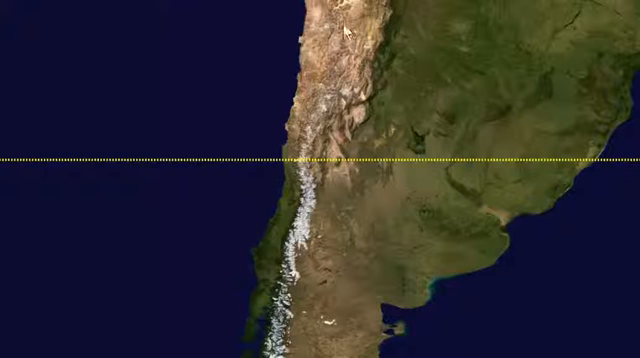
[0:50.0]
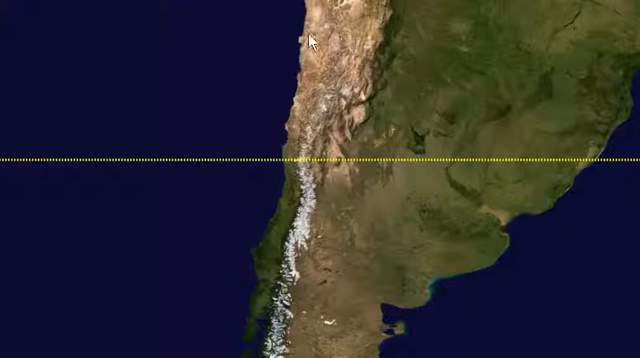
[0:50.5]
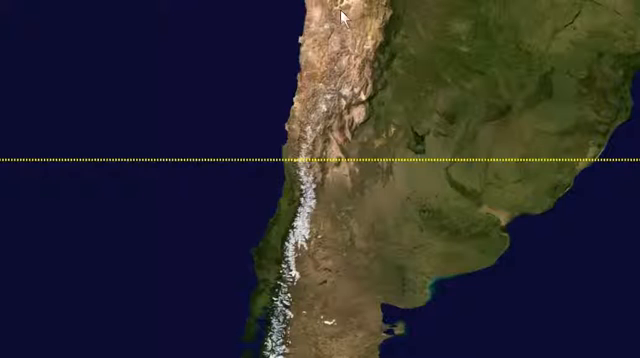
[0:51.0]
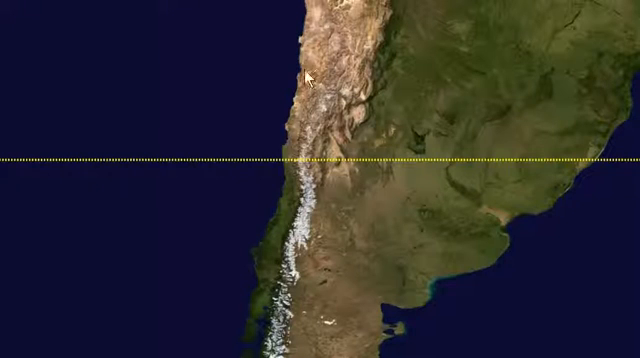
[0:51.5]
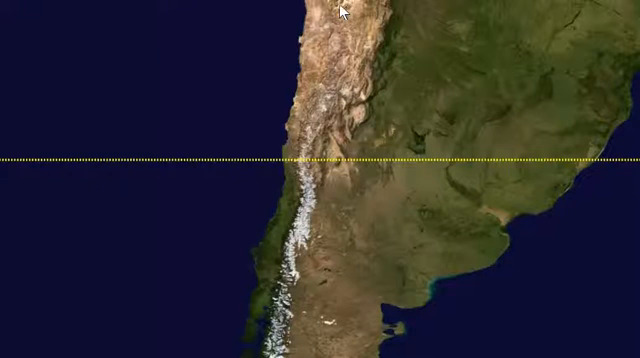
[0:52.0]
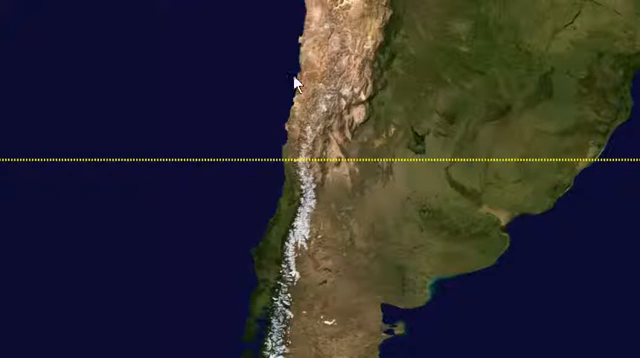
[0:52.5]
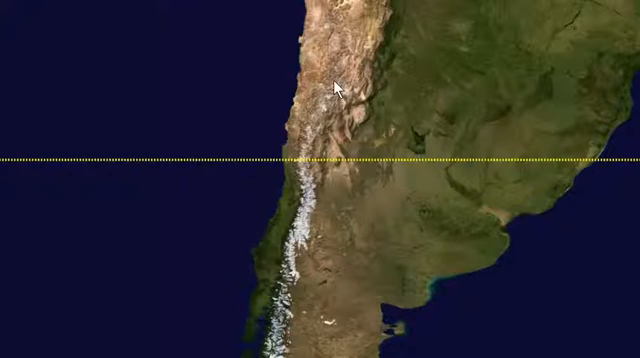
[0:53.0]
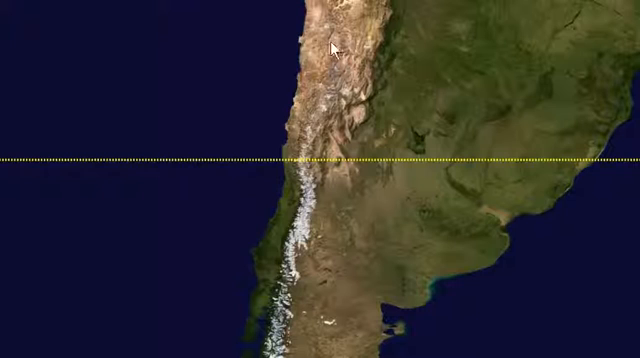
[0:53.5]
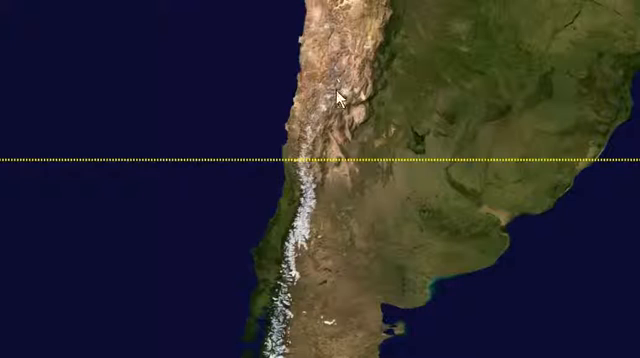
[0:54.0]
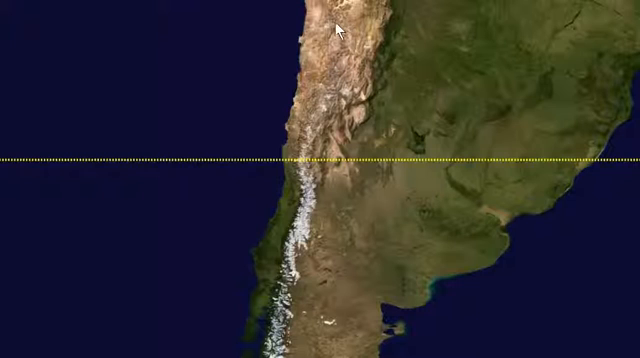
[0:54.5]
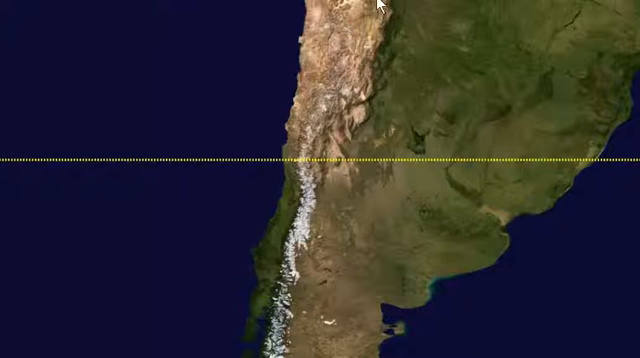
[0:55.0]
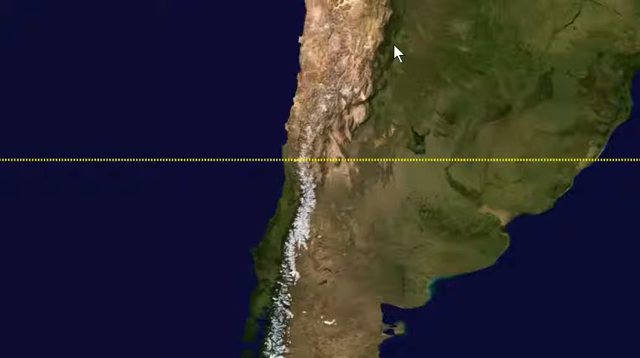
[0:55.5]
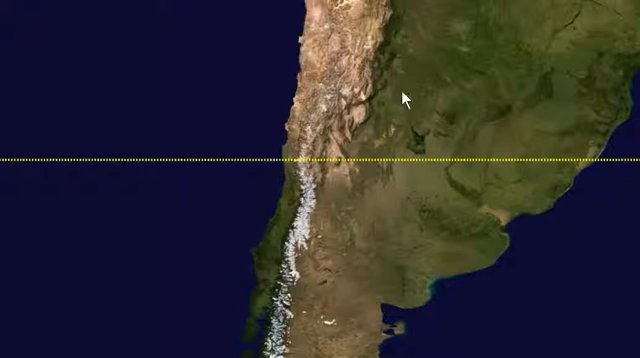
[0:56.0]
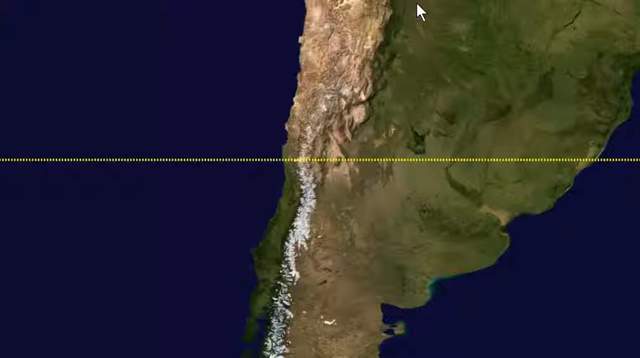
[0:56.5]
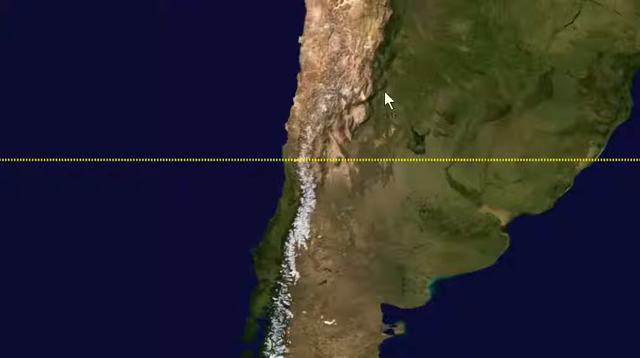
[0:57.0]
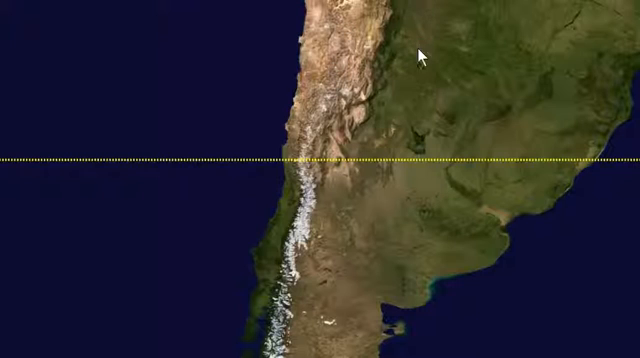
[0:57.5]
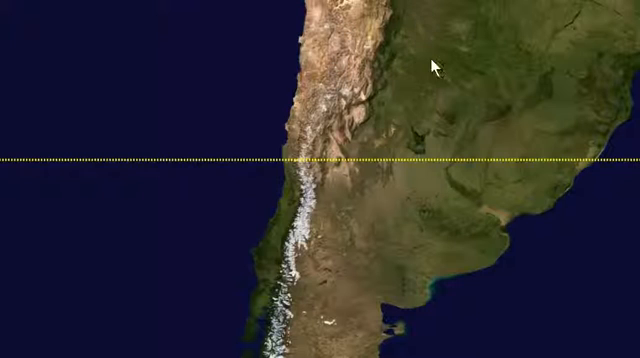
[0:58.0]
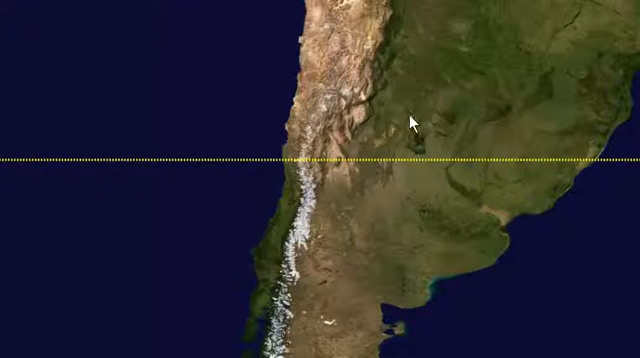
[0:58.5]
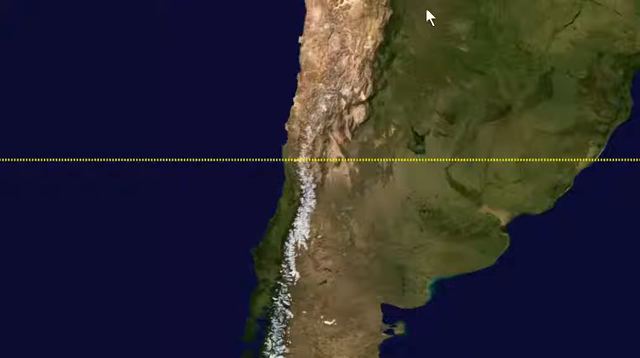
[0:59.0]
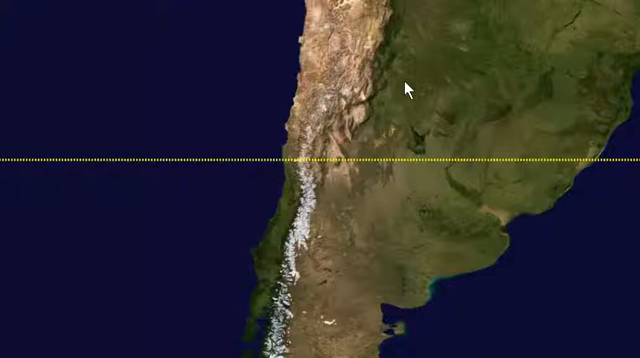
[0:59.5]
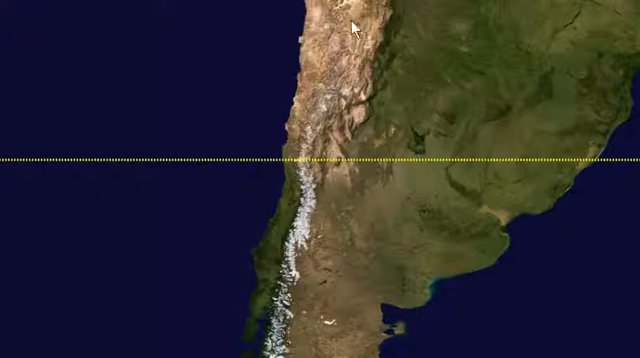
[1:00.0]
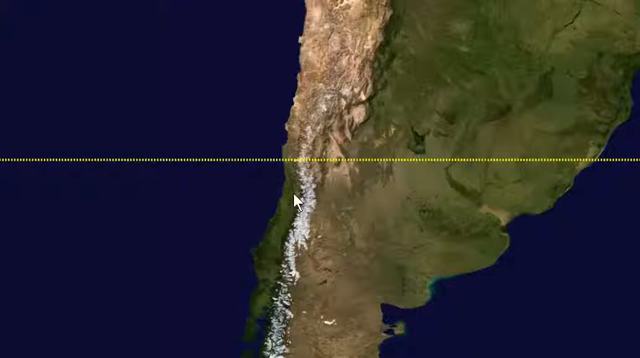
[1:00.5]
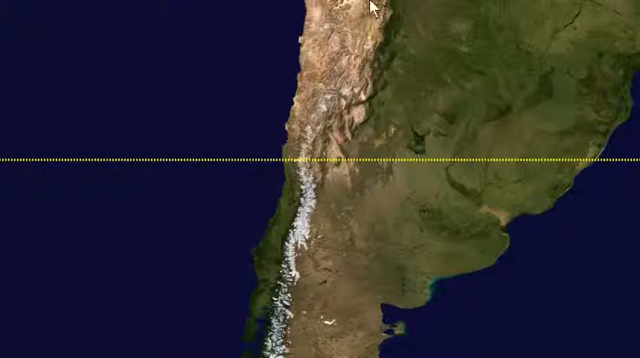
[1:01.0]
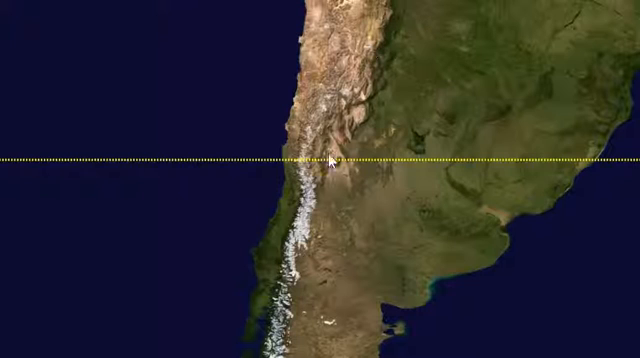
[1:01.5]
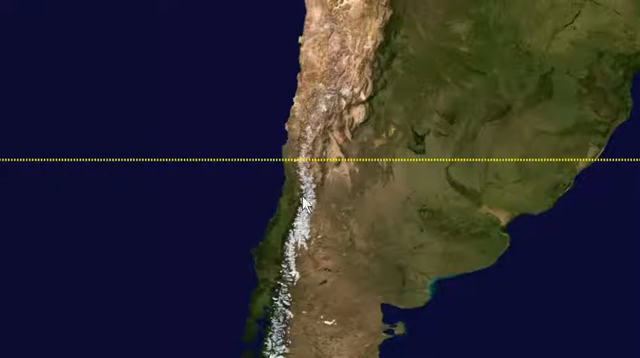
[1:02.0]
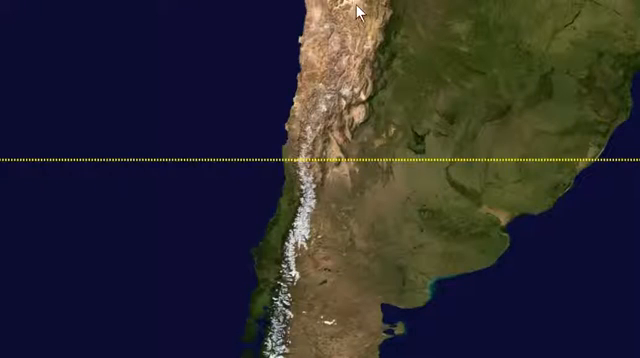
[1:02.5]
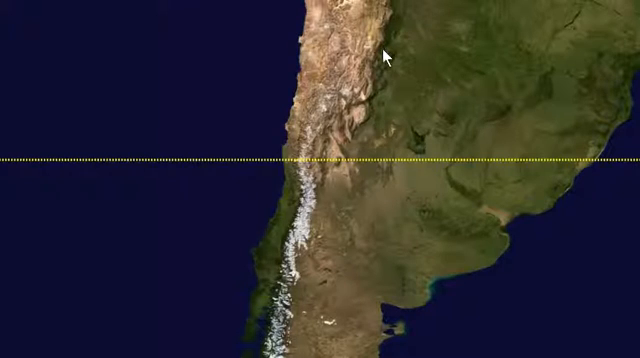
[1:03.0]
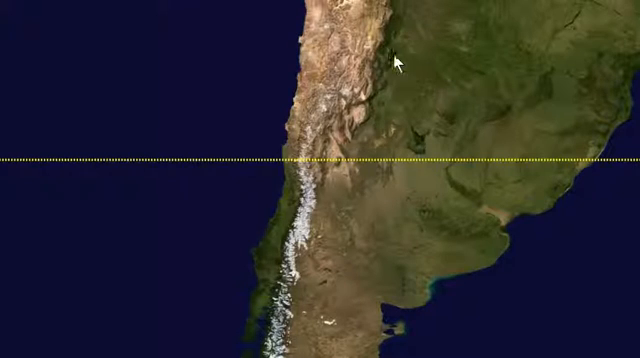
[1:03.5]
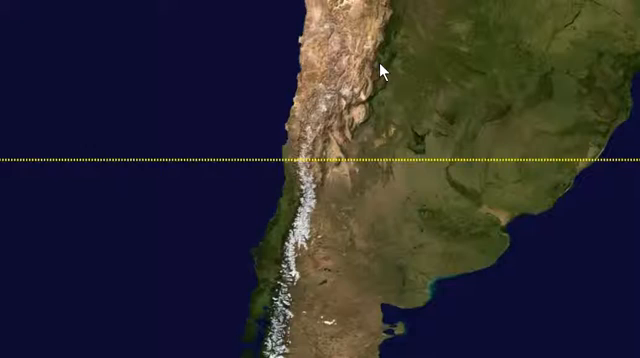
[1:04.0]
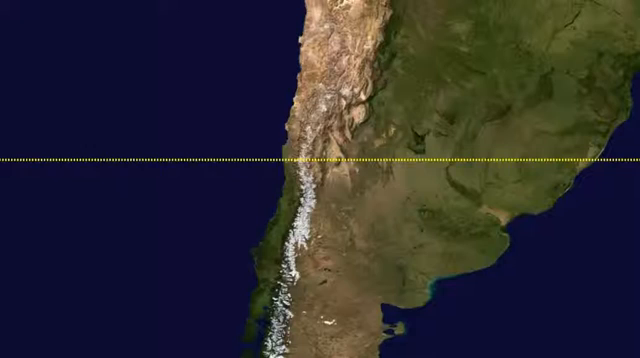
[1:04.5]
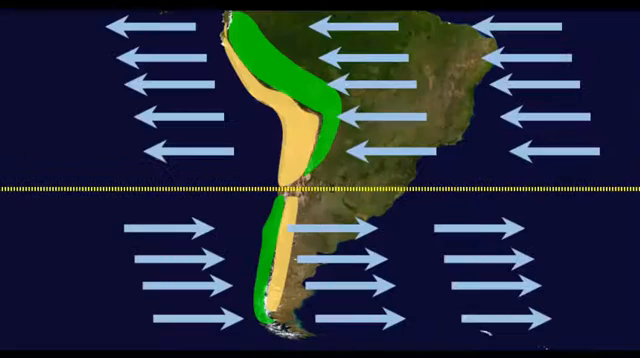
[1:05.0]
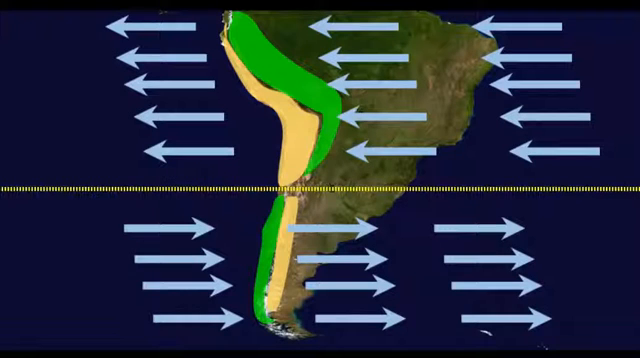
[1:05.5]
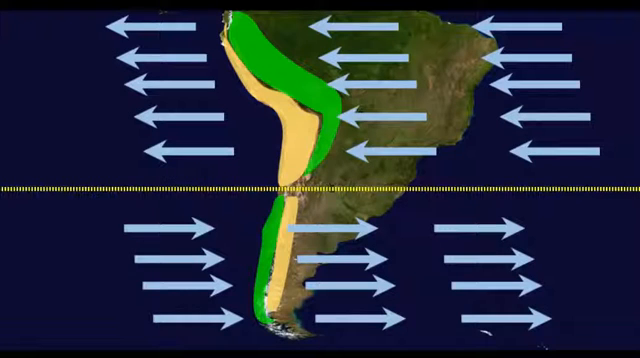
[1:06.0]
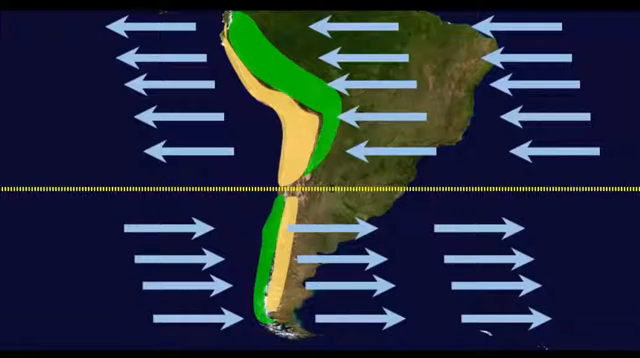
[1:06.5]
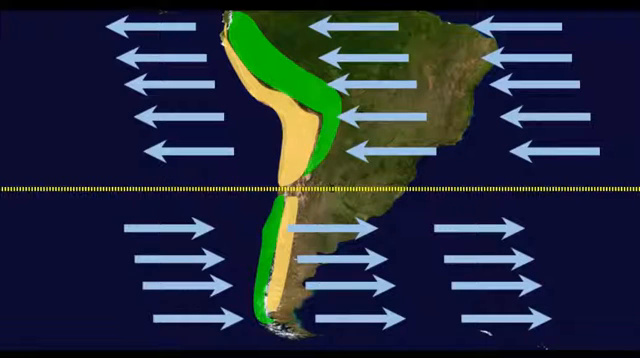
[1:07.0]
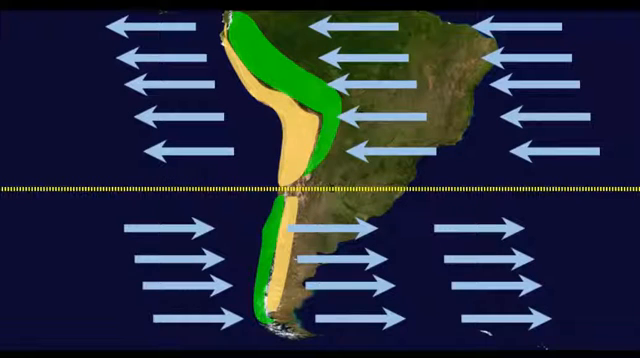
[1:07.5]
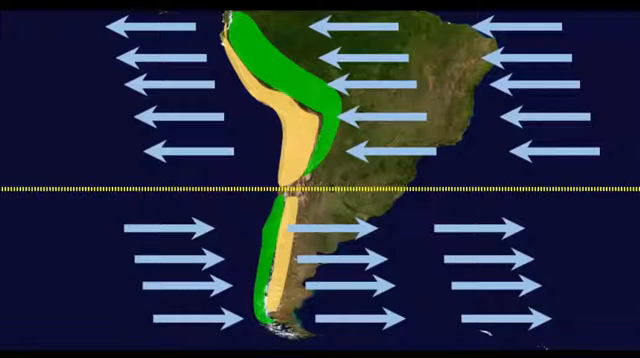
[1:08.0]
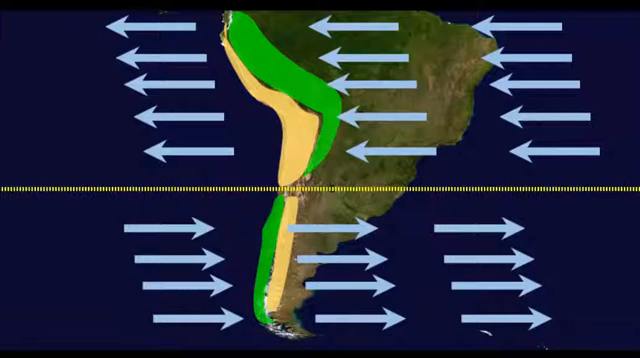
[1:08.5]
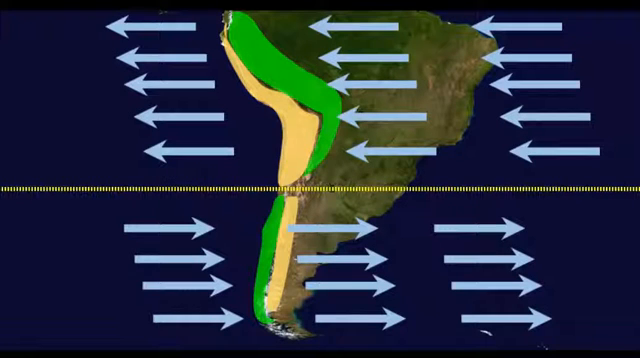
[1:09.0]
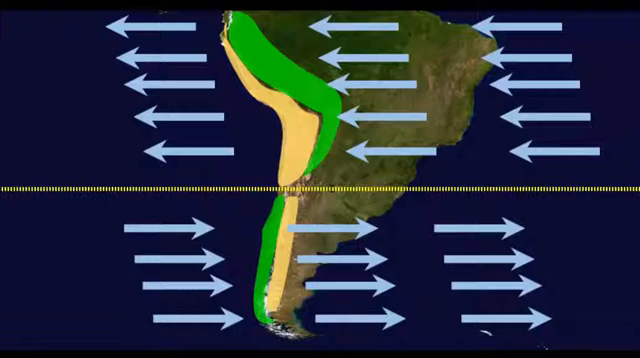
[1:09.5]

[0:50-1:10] The graphical map illustration is displayed on a dark background, with a horizontal yellow dotted line running from left to right along the midpoint of the map, across the screen and the landmass. A white mouse pointer hovers at the top of the screen over what looks like brownish rocky terrain, circling in this region for a few seconds before moving to the green landmass to its right, where it runs up and down and circles. The pointer runs below the yellow line and then moves back up to the green portion of the landmass above the line. An animation of pale blue arrows then pops up: three batches of five arrows each above the yellow line, pointing left, and three batches below the line, pointing right. A green and yellow highlight also appears on the west region of the landmass outline.